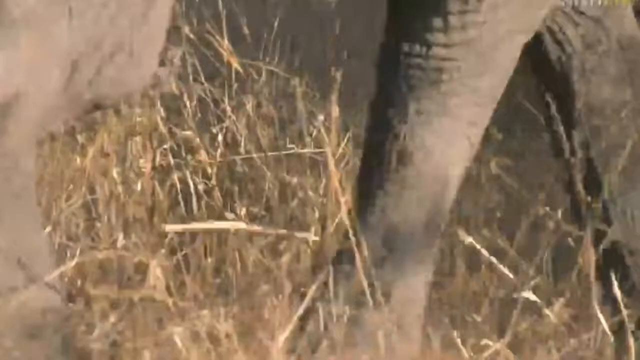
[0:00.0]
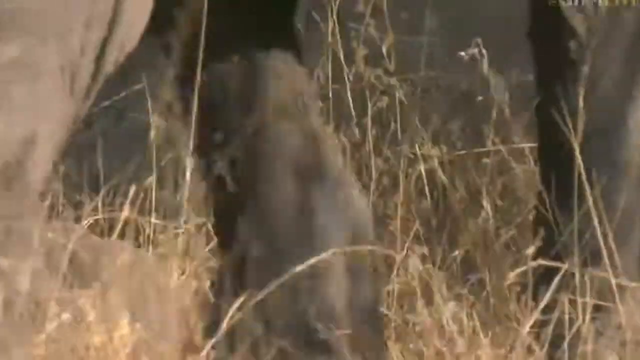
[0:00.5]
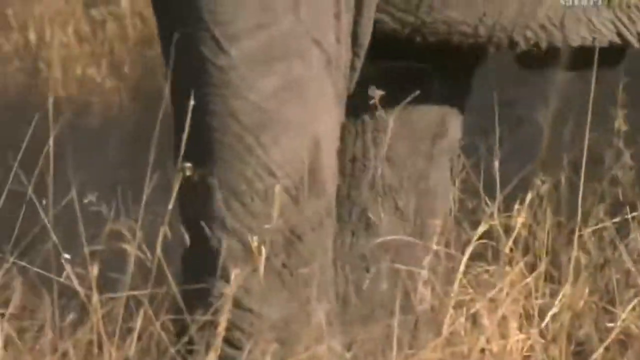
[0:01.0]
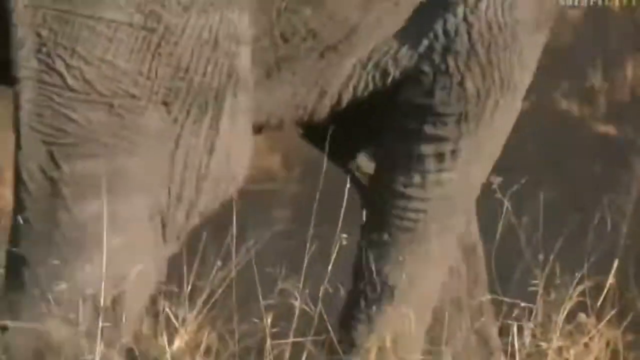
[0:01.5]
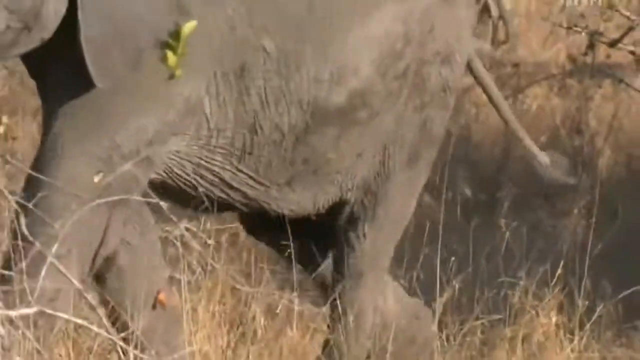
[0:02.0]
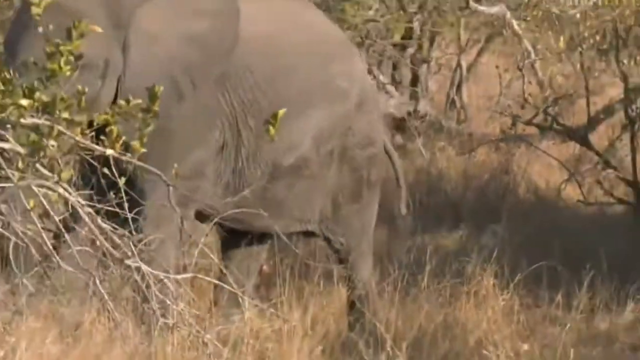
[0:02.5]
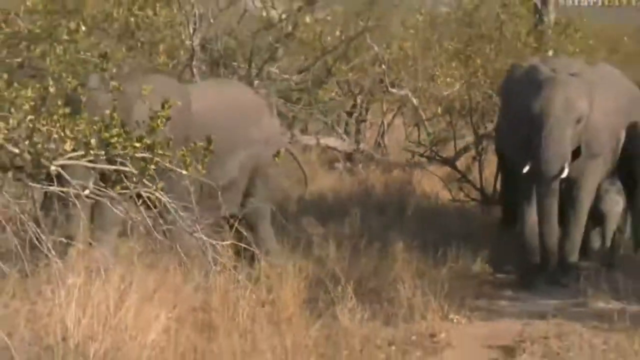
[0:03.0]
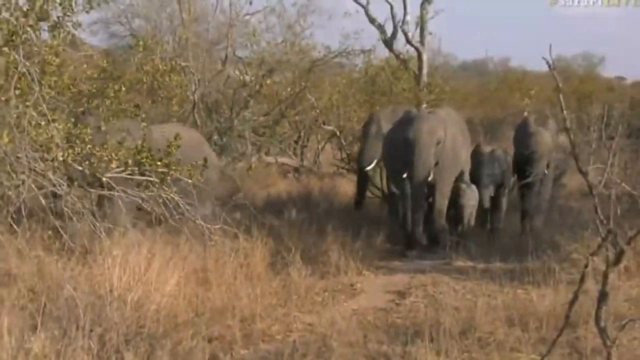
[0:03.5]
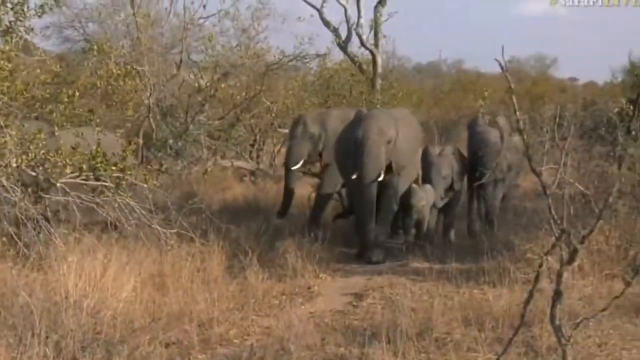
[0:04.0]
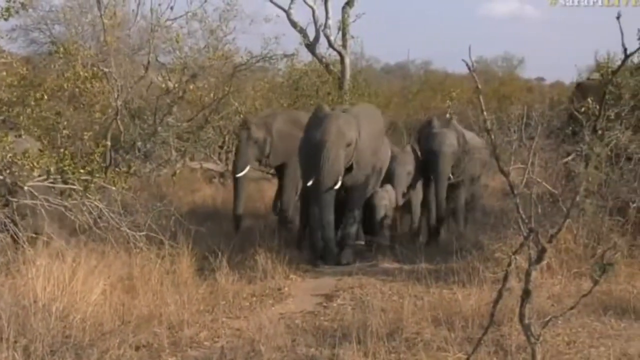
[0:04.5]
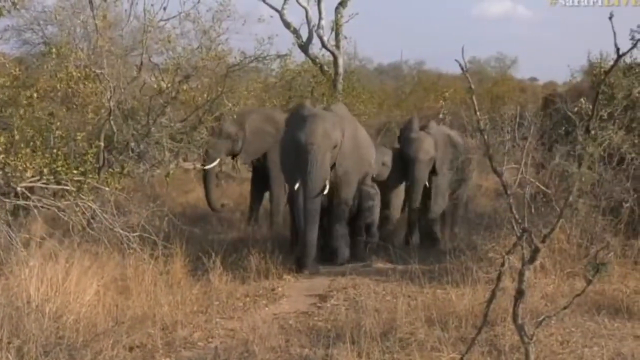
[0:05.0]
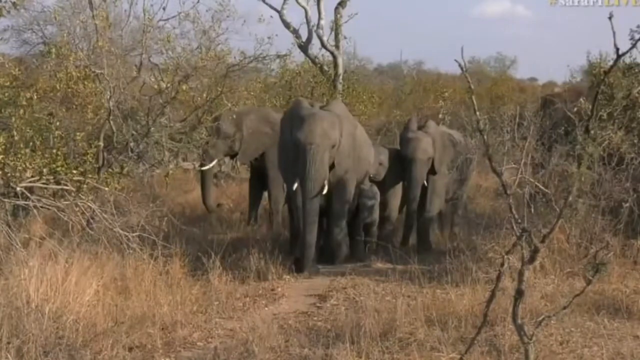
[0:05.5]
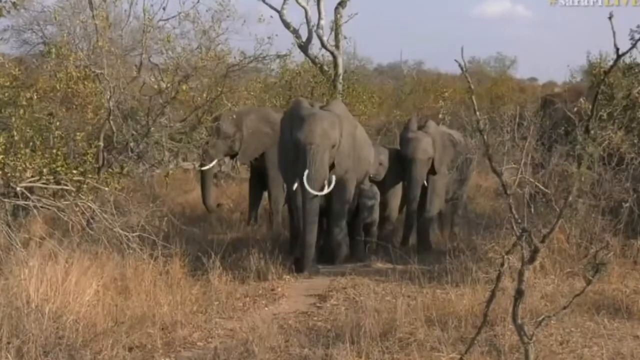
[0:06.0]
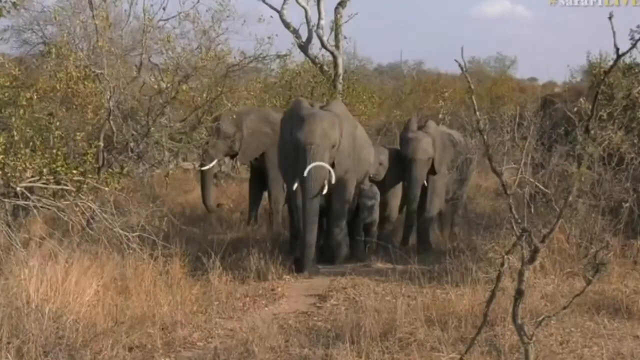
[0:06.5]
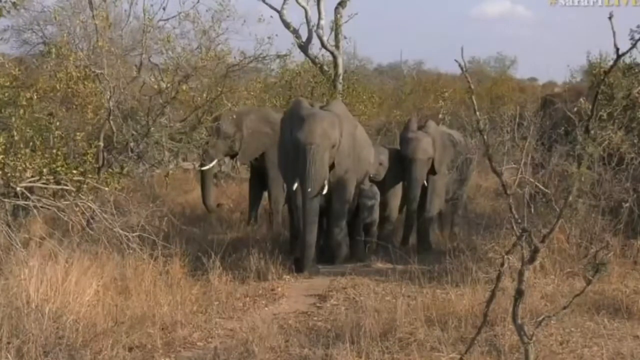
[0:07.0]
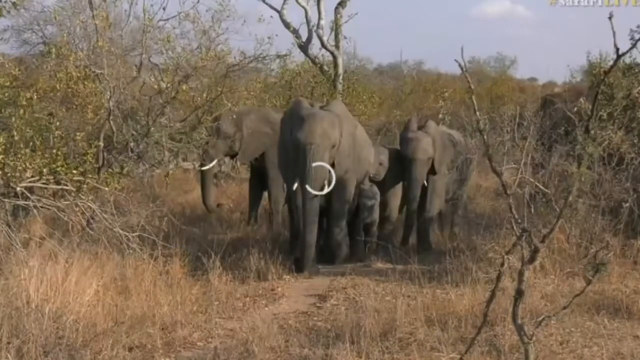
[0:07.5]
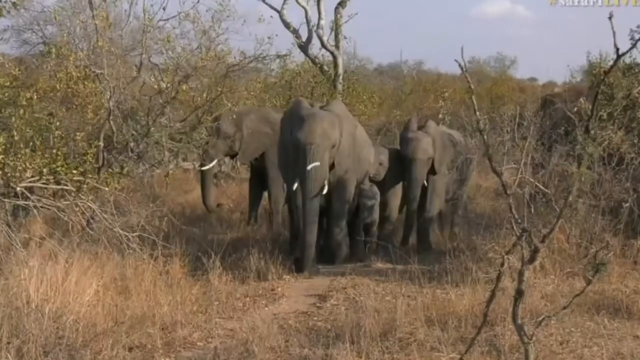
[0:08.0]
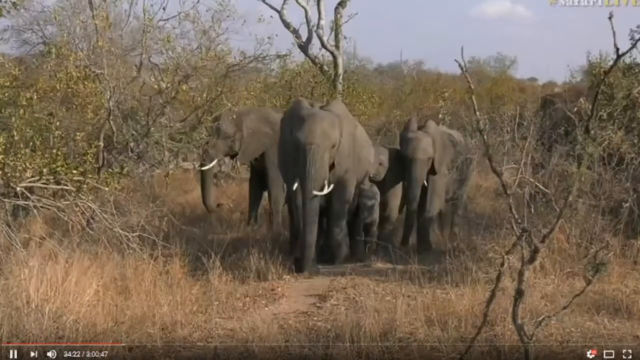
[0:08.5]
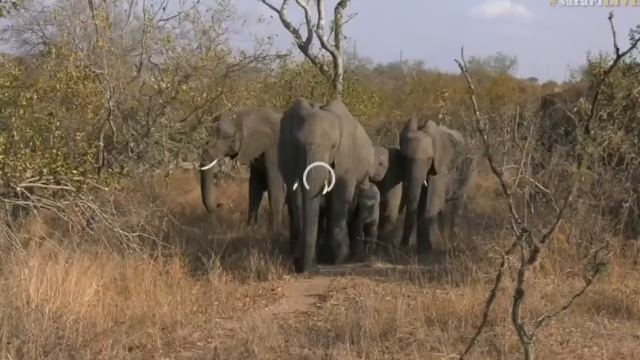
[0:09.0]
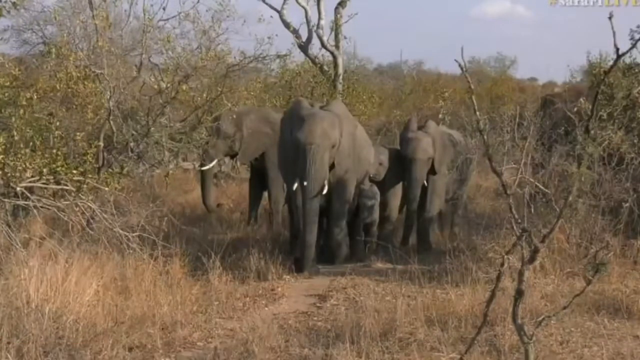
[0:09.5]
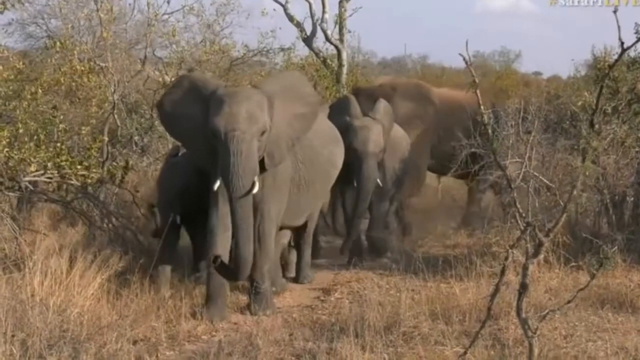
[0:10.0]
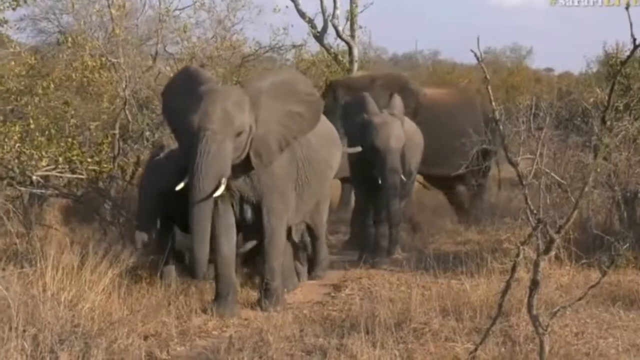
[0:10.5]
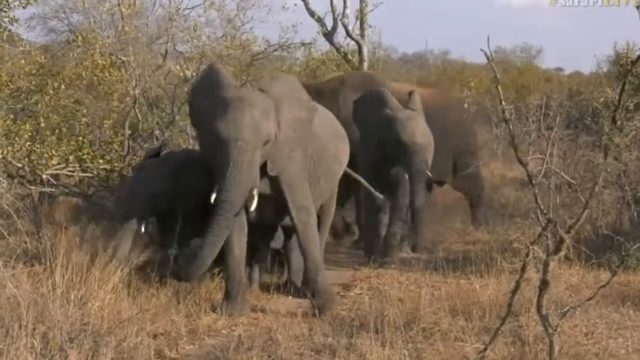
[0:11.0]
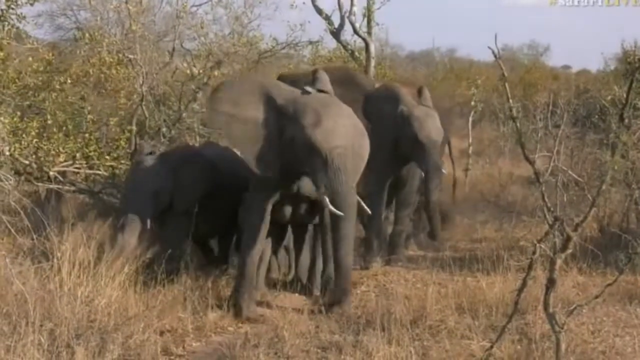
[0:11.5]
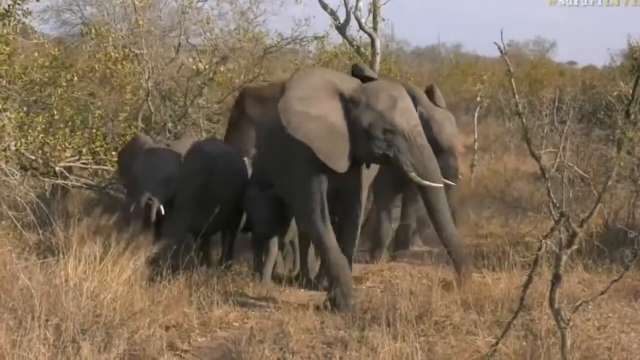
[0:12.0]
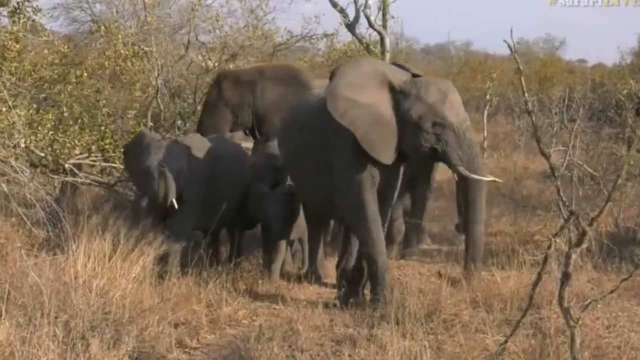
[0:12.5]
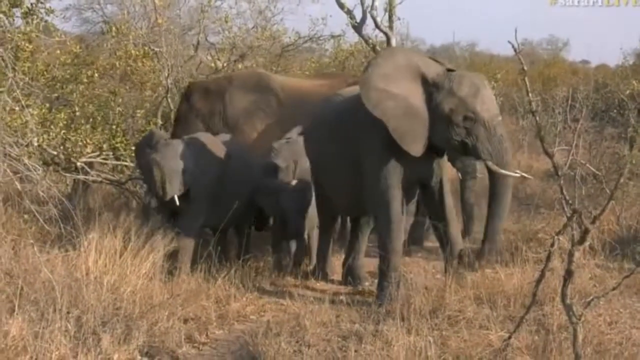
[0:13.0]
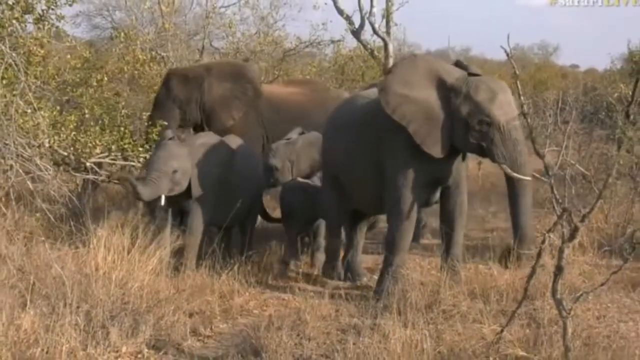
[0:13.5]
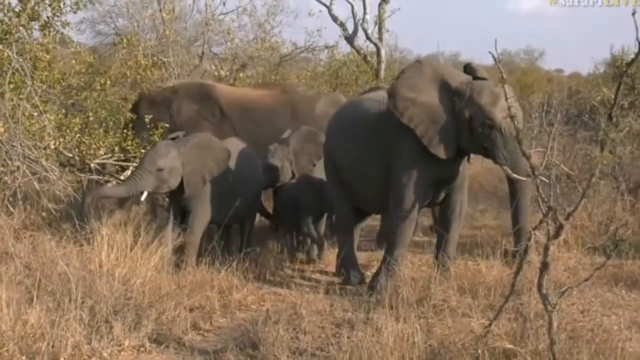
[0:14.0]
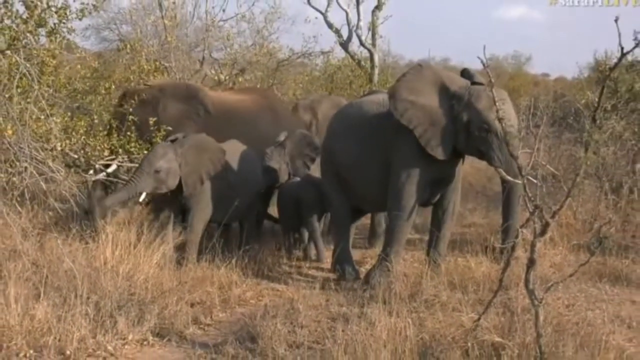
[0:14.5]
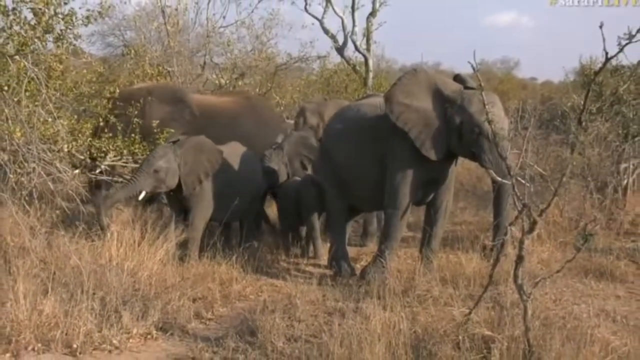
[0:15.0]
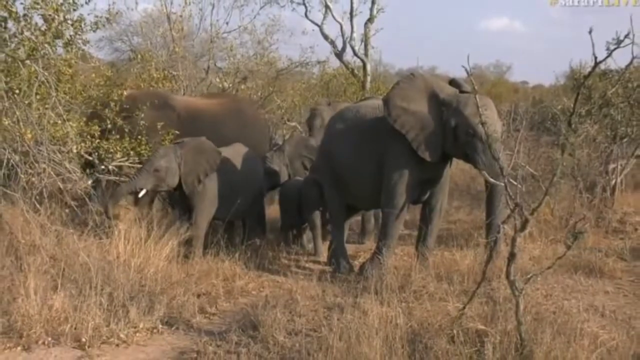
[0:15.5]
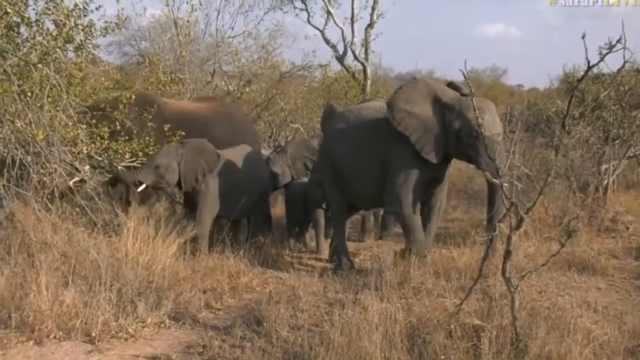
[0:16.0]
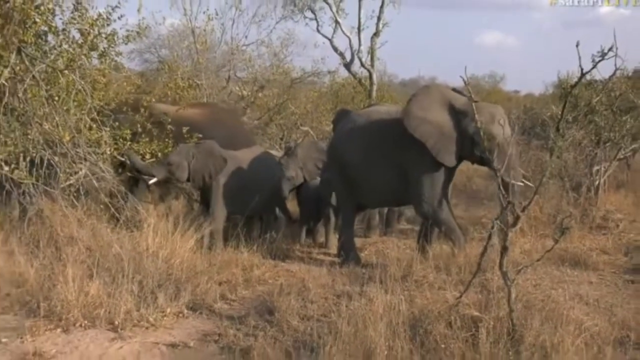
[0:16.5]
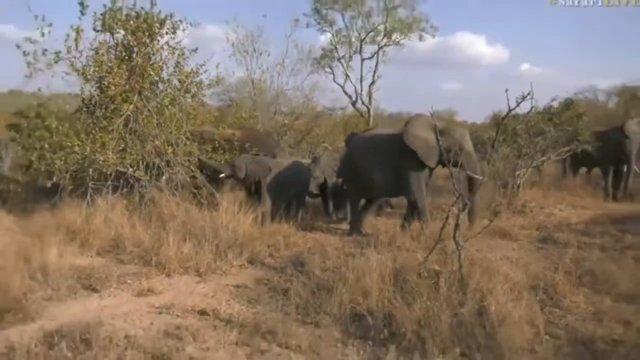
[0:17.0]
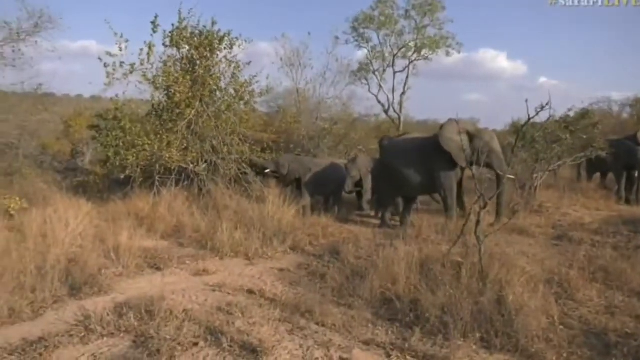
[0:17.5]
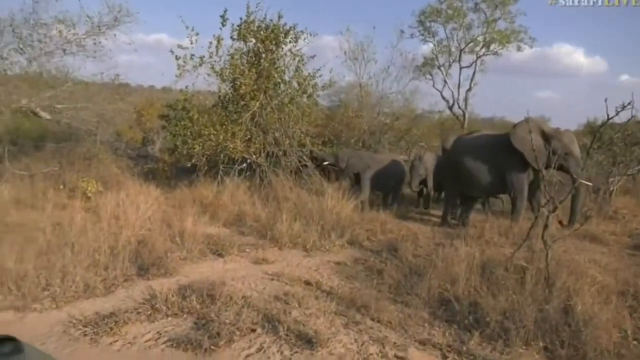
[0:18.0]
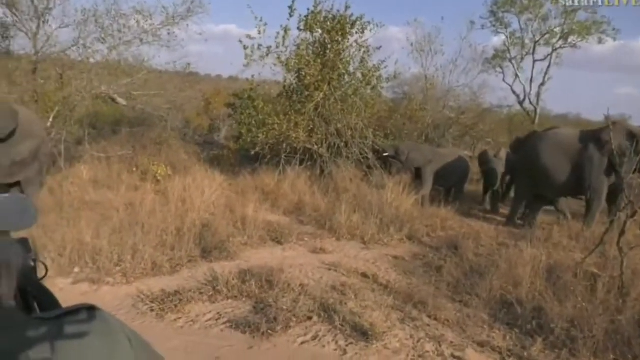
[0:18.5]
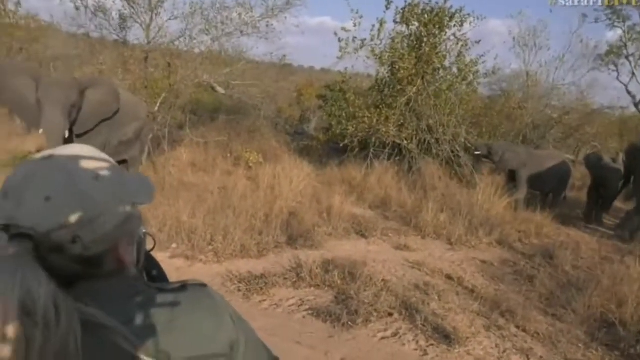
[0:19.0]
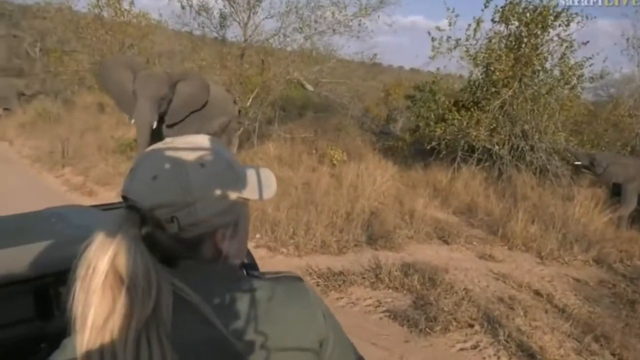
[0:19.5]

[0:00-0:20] The video opens on the legs of an elephant that looks older, with a lot of wrinkles that seem a little extreme even for an elephant. The elephant walks out of frame, and a family of elephants, like a miniature herd, comes up from the rear. The vegetation looks somewhat withered, apparently summertime. The animals walk and seem to be looking around, possibly for food. The elephants are of all different sizes, including some smaller ones, and they look like a family. In the distance on the left there appears to be a camera crew, seemingly sitting inside some type of vehicle; they are briefly visible. One of them wears a hat, one has a ponytail extending out the back of the hat, and they are observing.